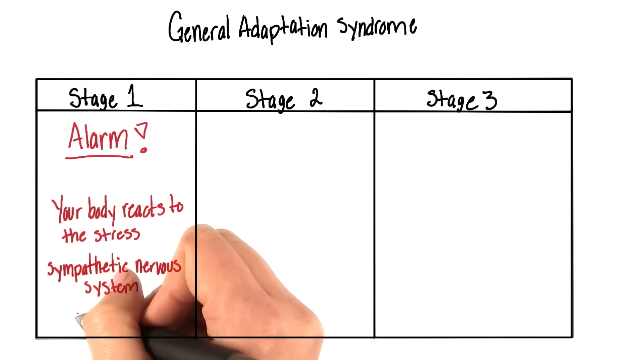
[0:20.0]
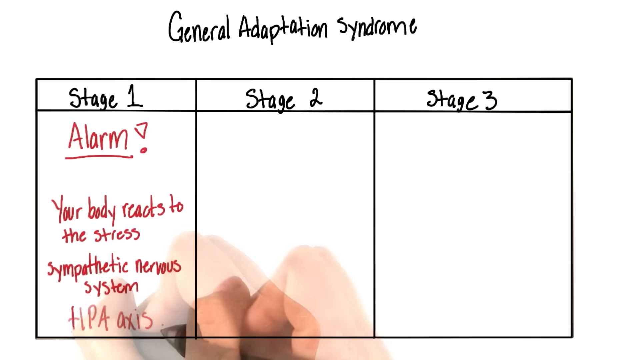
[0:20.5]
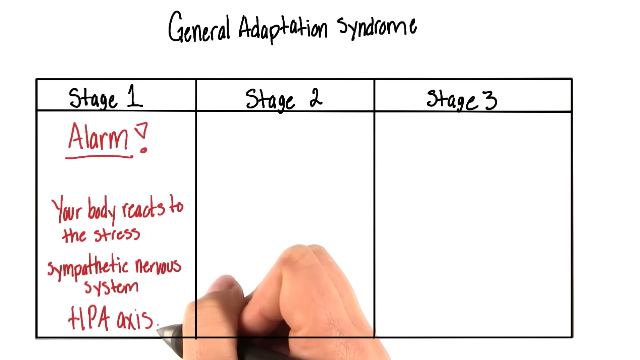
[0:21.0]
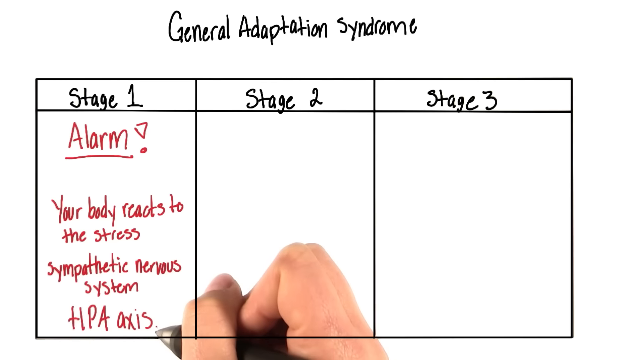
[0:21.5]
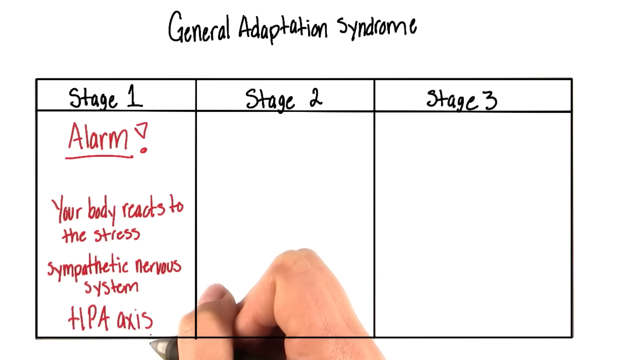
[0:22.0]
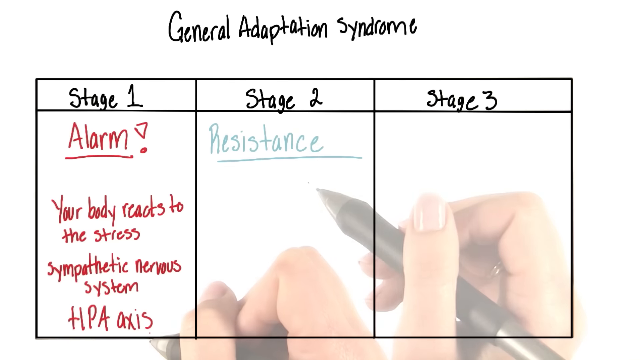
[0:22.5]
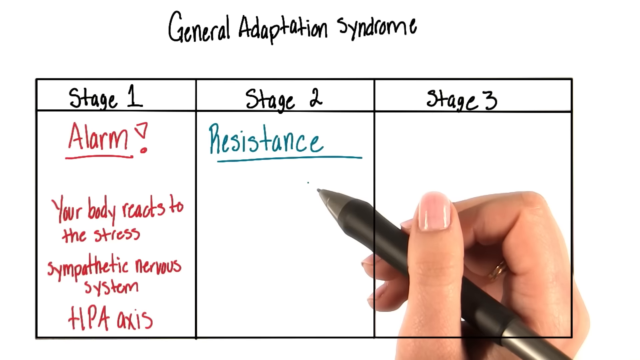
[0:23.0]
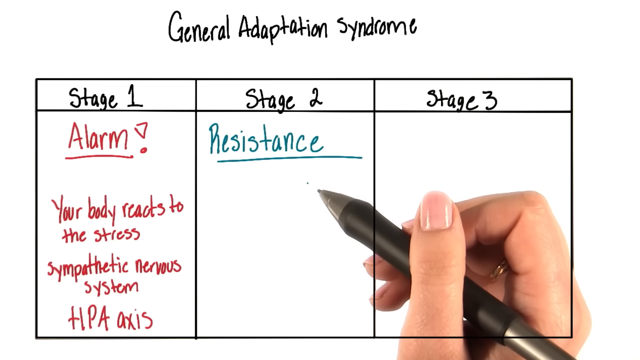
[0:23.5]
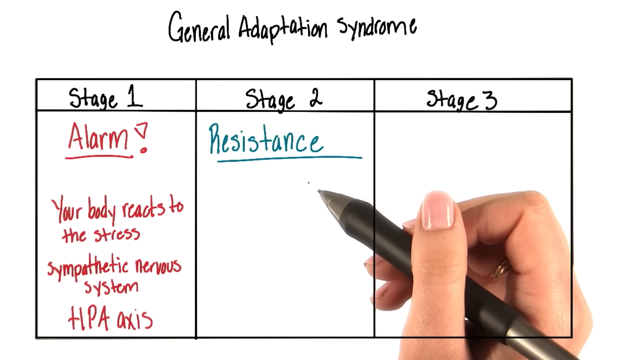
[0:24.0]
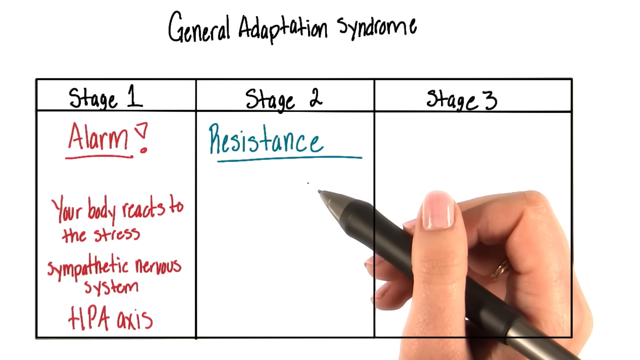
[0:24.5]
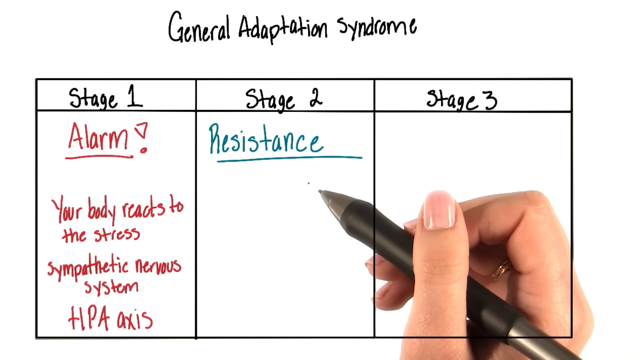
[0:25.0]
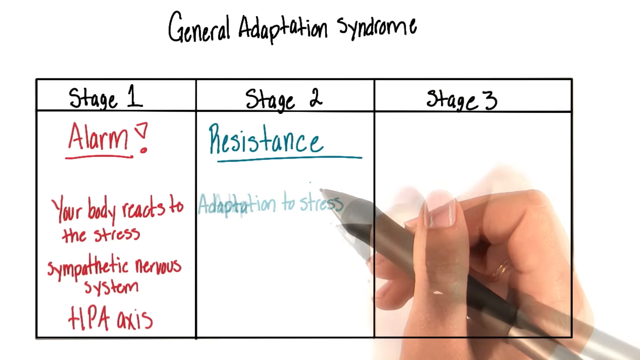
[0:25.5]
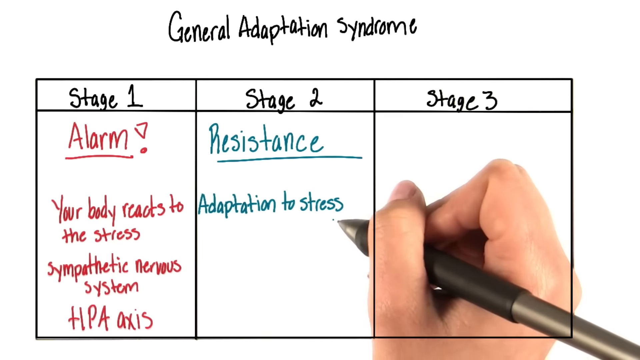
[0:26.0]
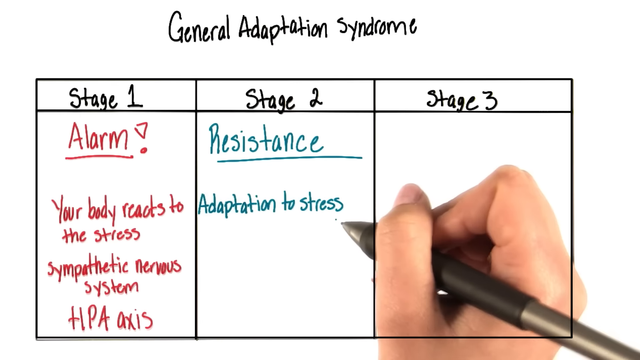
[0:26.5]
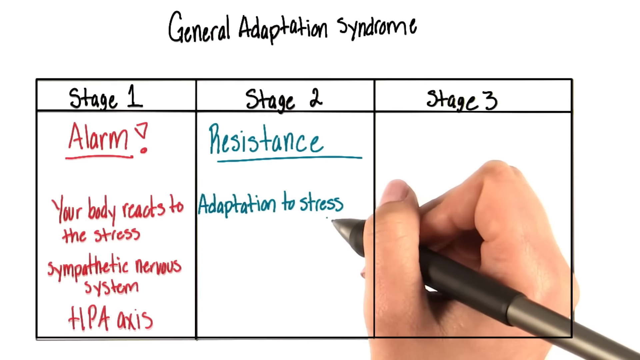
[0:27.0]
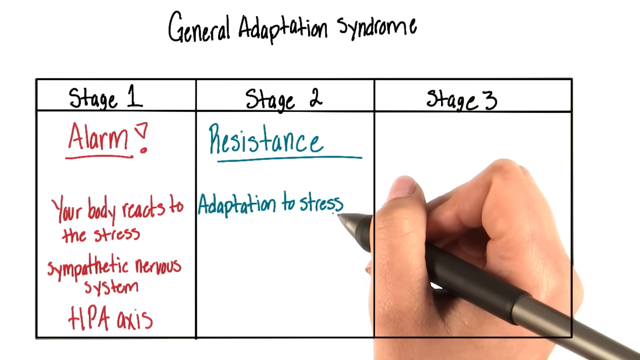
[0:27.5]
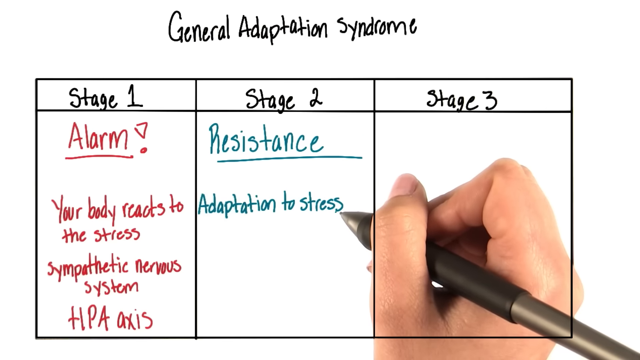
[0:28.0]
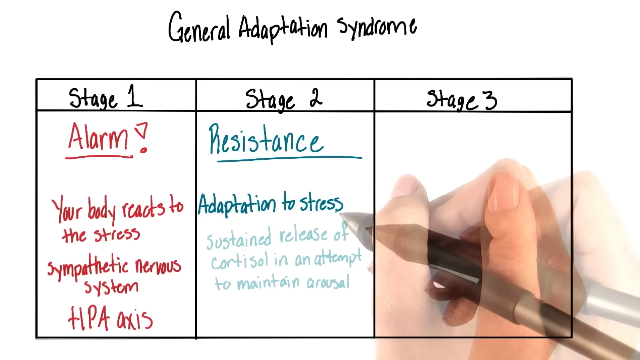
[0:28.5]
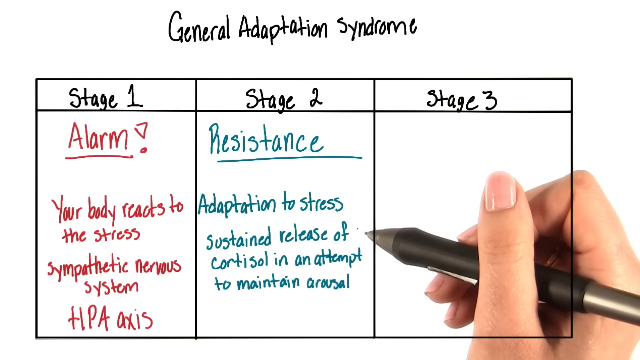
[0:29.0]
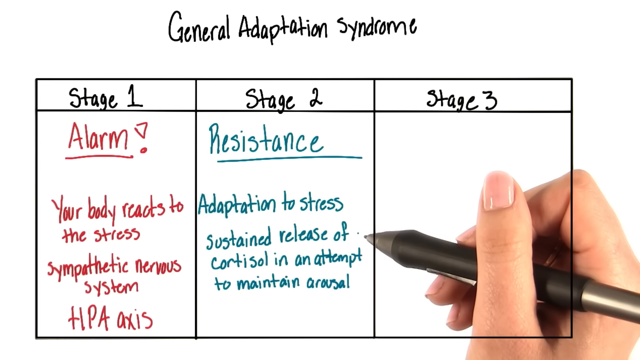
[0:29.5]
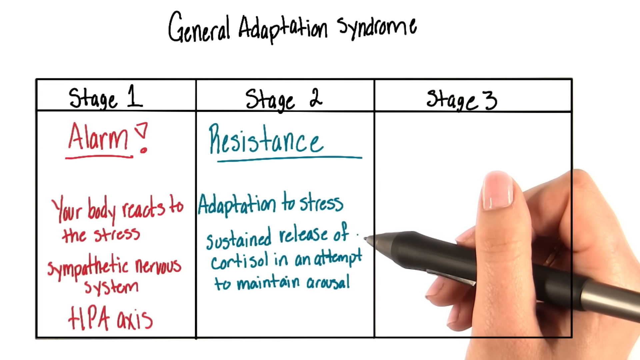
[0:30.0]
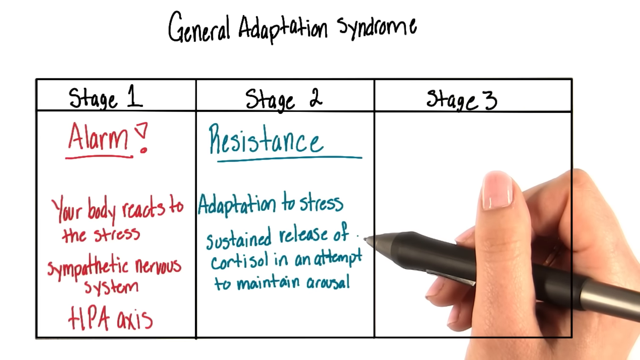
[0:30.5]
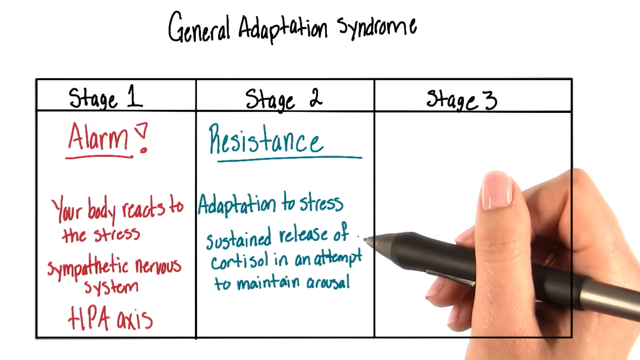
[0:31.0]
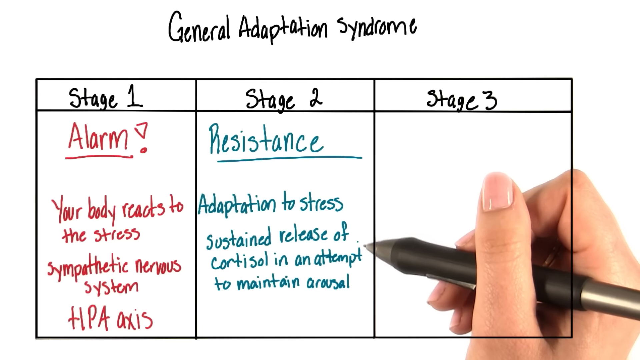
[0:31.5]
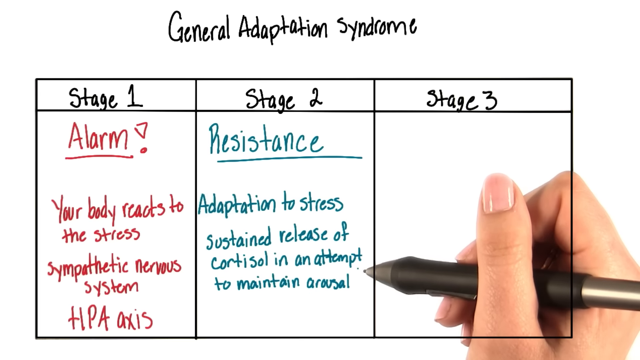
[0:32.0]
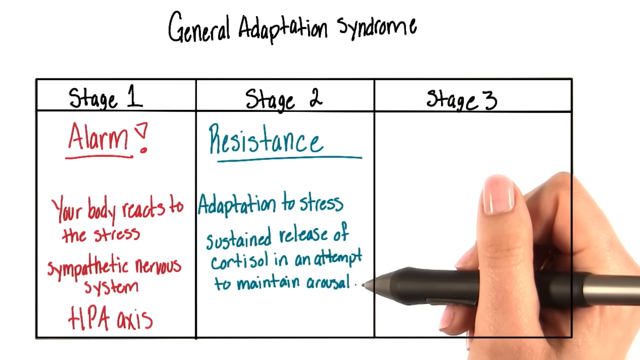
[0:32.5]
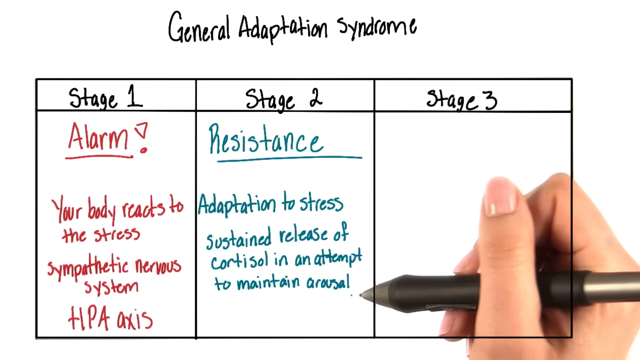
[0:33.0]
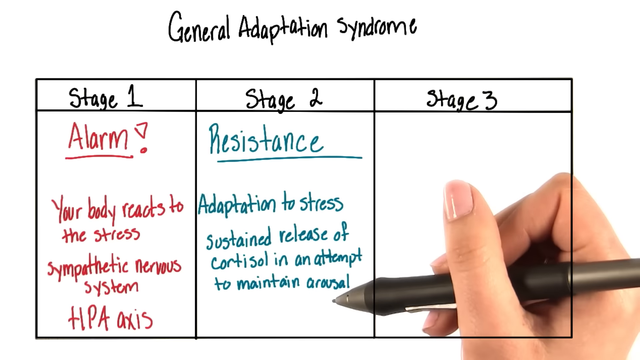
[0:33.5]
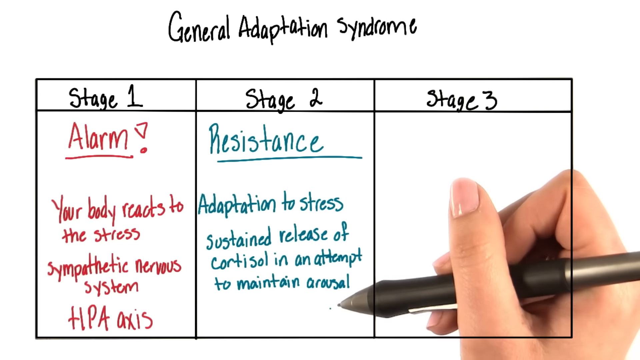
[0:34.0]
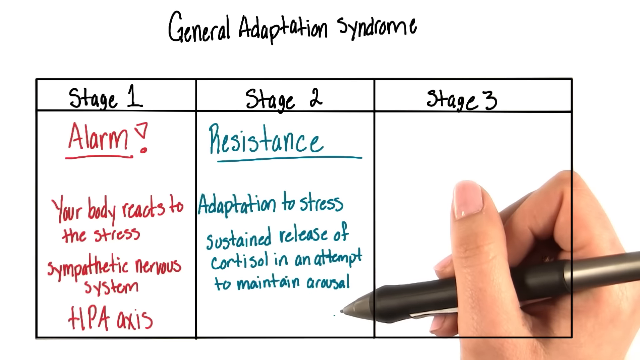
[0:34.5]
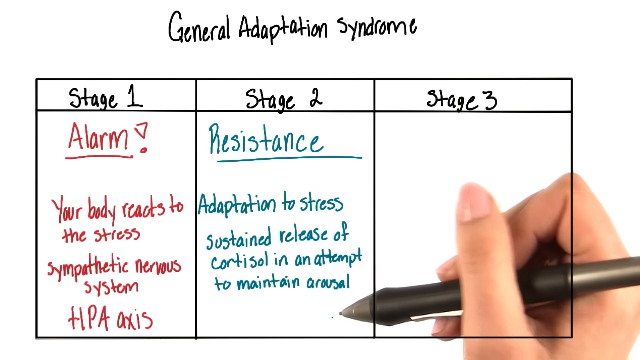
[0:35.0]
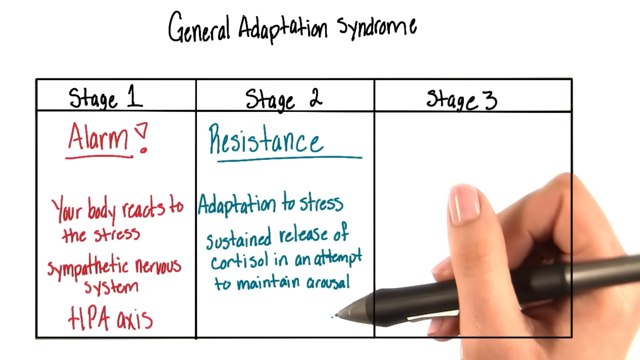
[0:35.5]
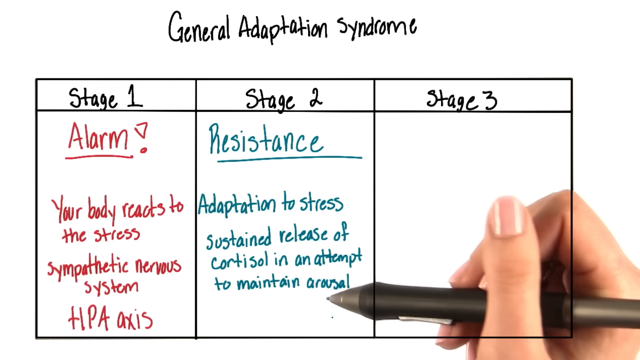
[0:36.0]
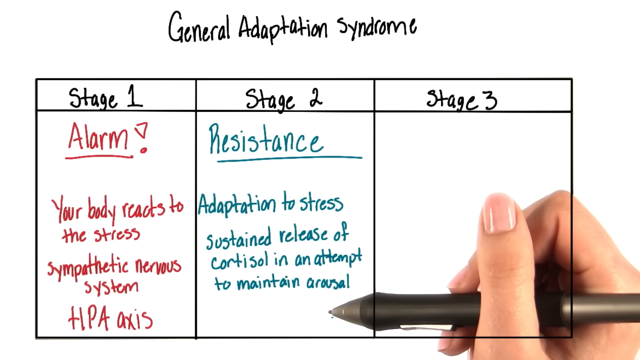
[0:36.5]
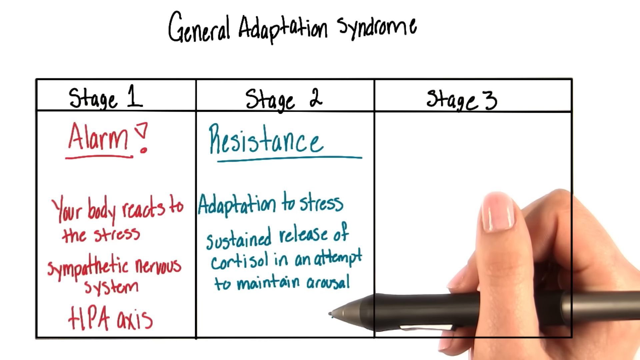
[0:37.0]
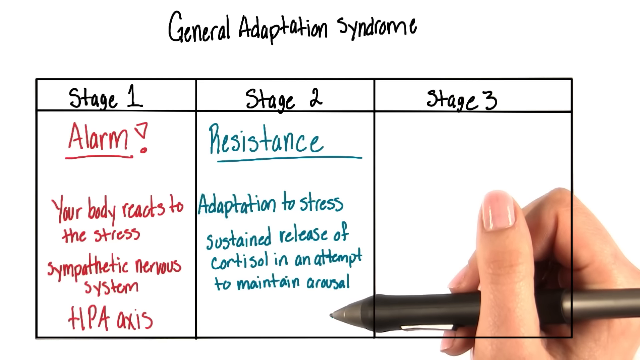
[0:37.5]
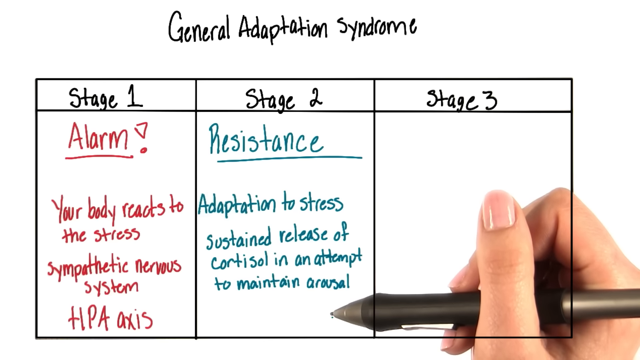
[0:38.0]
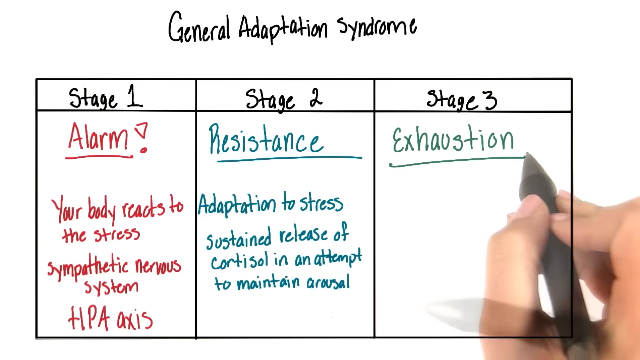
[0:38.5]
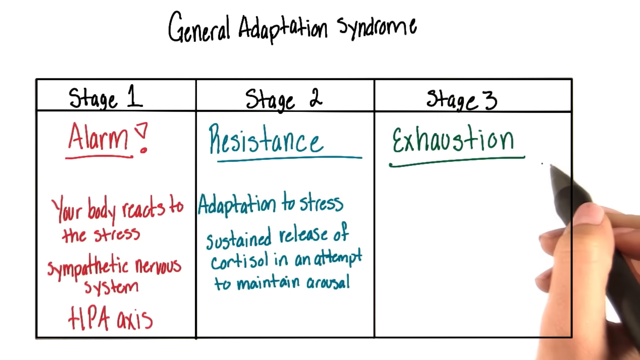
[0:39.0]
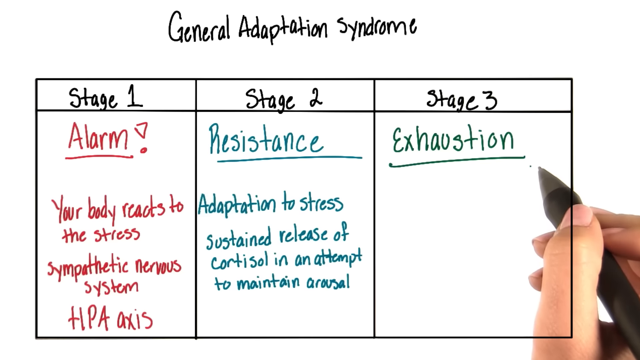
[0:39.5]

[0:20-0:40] The woman writes "HPA AXIS" in capitals in the stage 1 column. In the stage 2 column she writes the word "resistance" in green ink and underlines it, then writes "adaptation to stress" and "sustained release of cortisol in an attempt to maintain arousal". She rests her pen for a moment. In the stage 3 column she writes "exhaustion" in green ink and underlines it. The pen is black with a silver tip, somewhat charcoal gray. The topic is general adaptation syndrome.